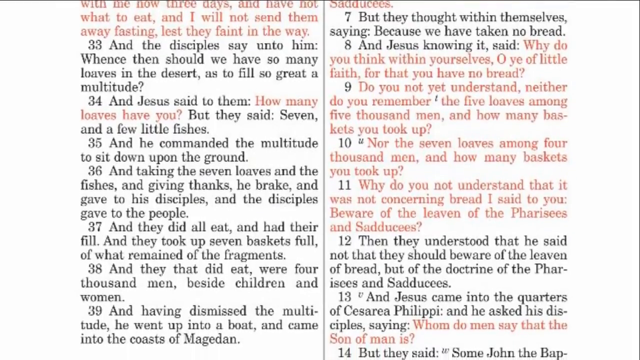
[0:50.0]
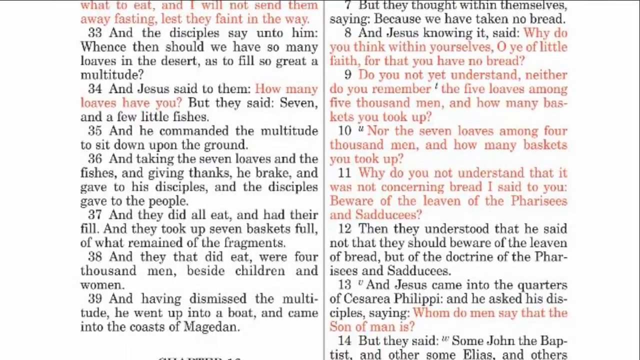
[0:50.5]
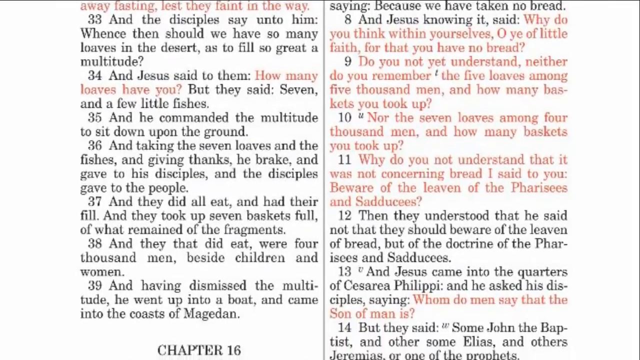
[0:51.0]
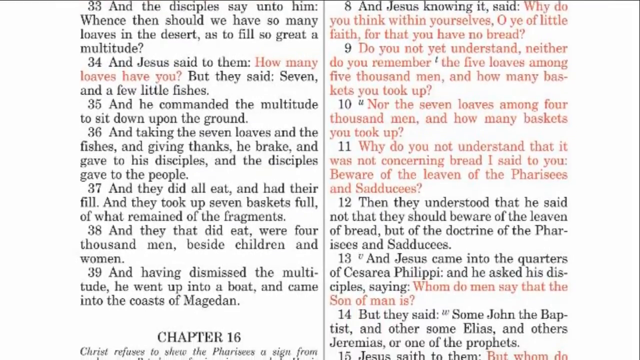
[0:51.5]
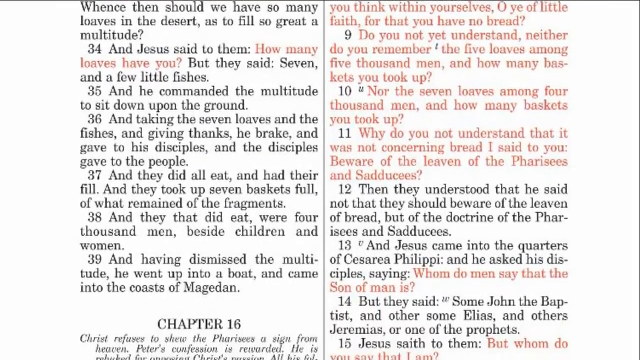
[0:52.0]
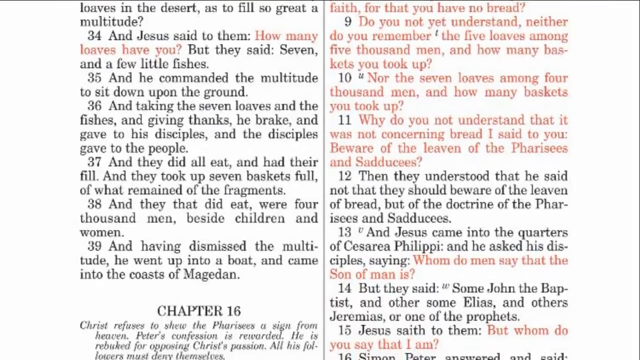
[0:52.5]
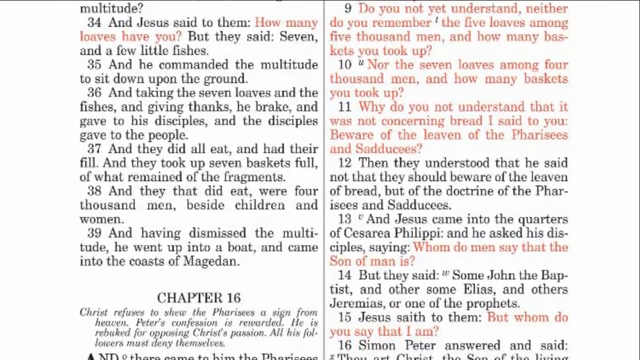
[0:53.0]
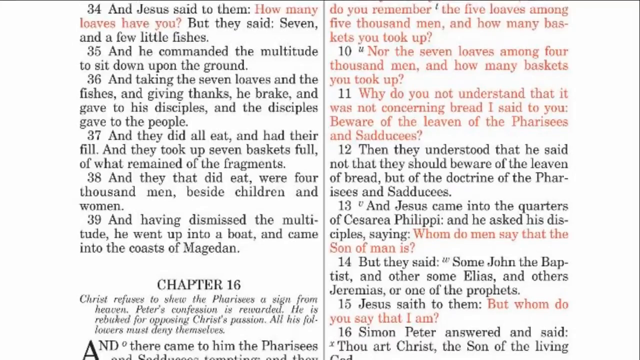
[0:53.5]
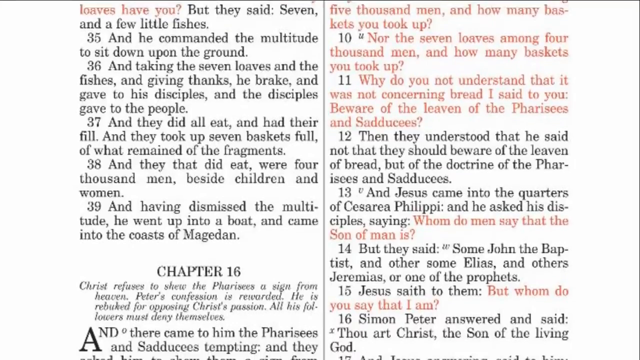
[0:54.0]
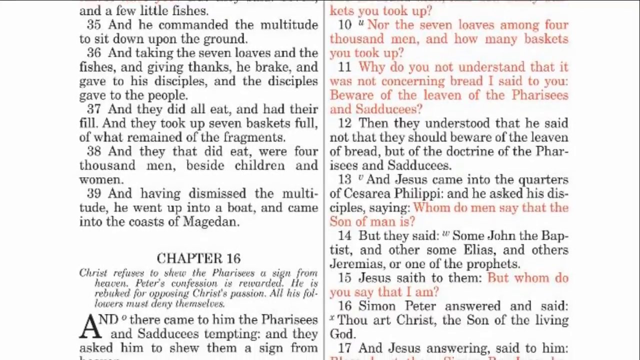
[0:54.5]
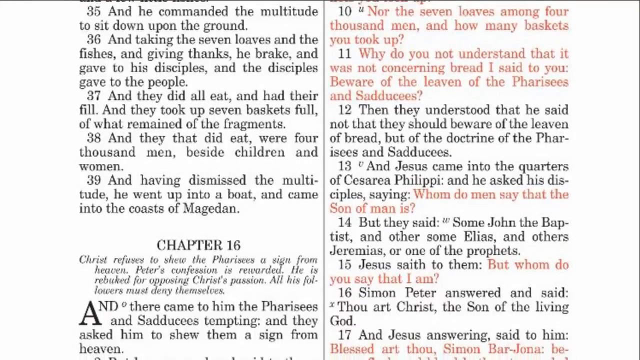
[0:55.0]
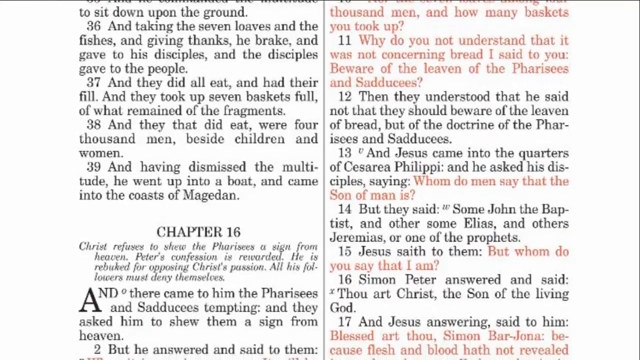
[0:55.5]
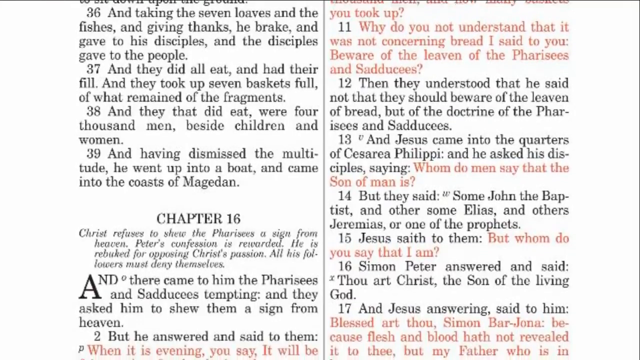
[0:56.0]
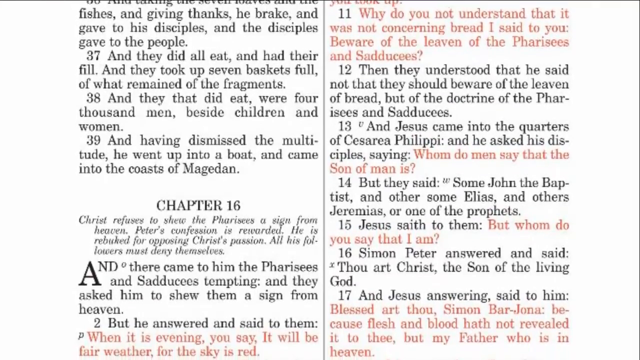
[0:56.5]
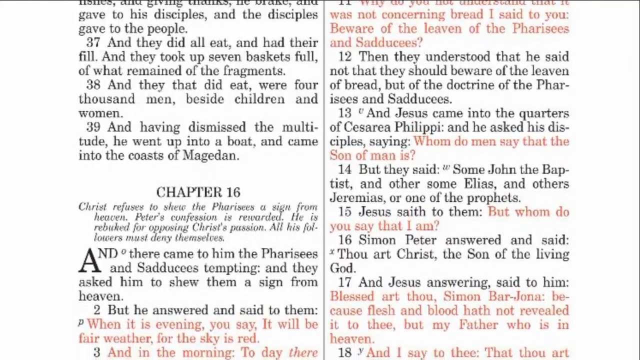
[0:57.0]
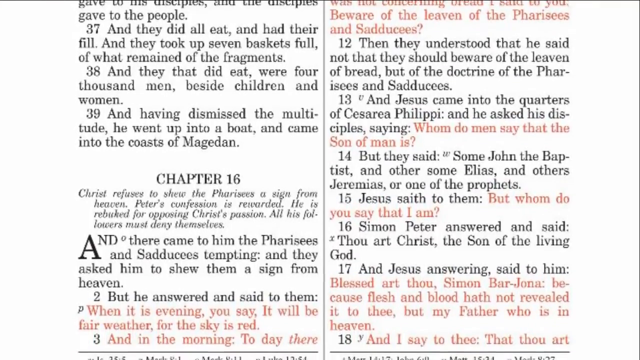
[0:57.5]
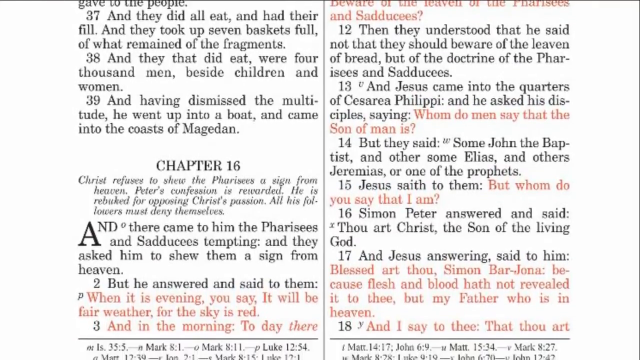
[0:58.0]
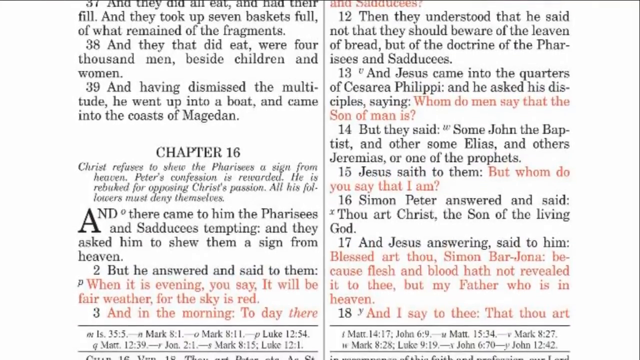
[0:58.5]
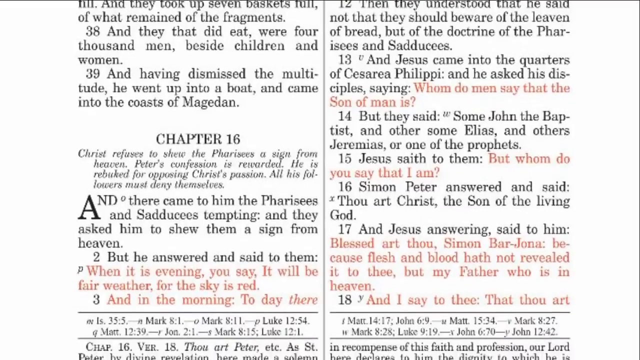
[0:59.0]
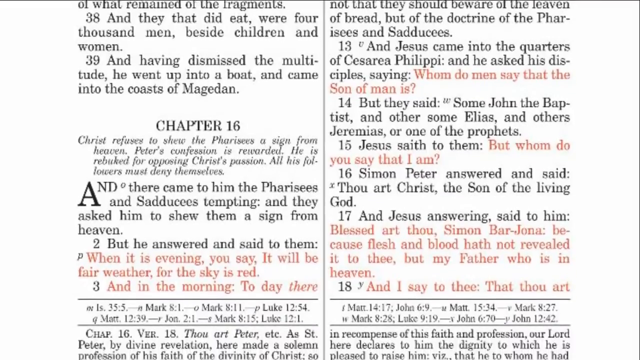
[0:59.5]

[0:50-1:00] The Bible remains open at Matthew 16, labeled "St. Matthew". At the top left of the page are words in red, the words of Christ, and just below them verse 33 begins in black: "And the disciples say unto him, Whence then should we have so many loaves in the desert, as to fill so great a multitude?" Verse 34 follows: "And Jesus said to them, How many loaves have you?", in red. The text continues on to verse 39. Beyond a faint black line on the right side of the page, the visible text starts from verse 7, which reads "But they thought within themselves, saying, Because we have taken no bread." The text apparently continues there from chapter 15 to chapter 16. The view slowly scrolls down until chapter 16 appears at the bottom.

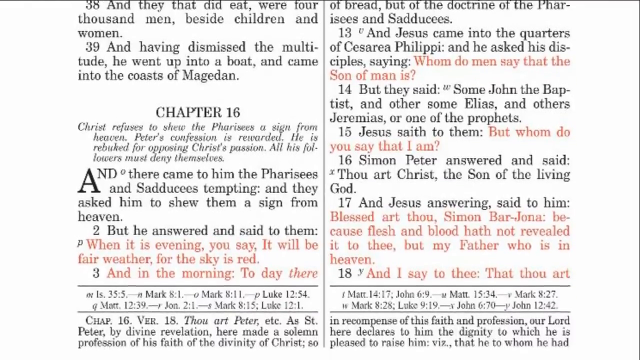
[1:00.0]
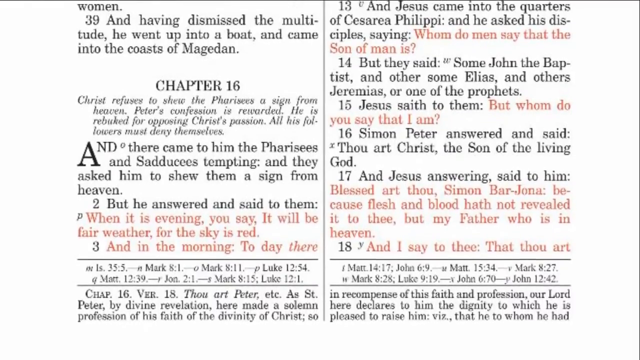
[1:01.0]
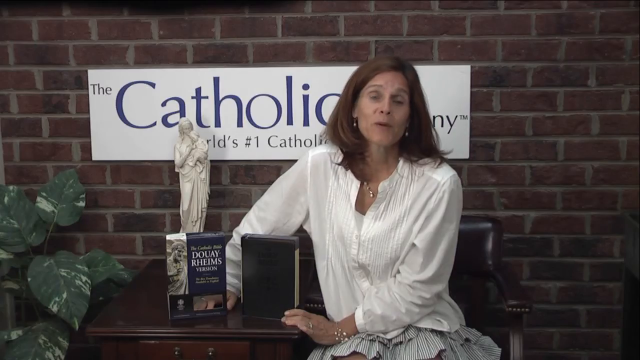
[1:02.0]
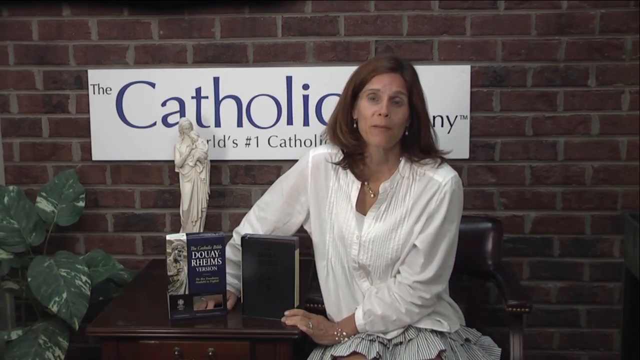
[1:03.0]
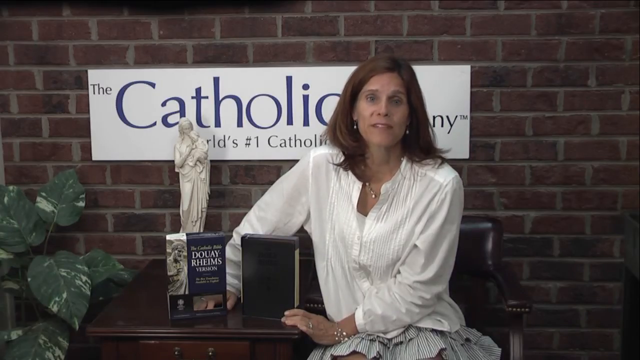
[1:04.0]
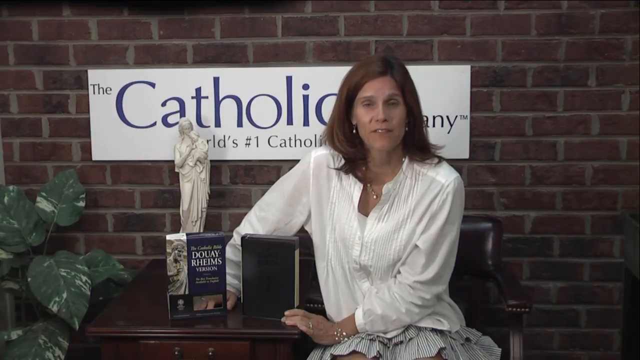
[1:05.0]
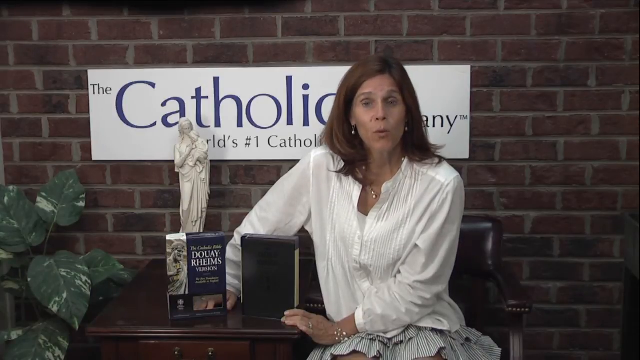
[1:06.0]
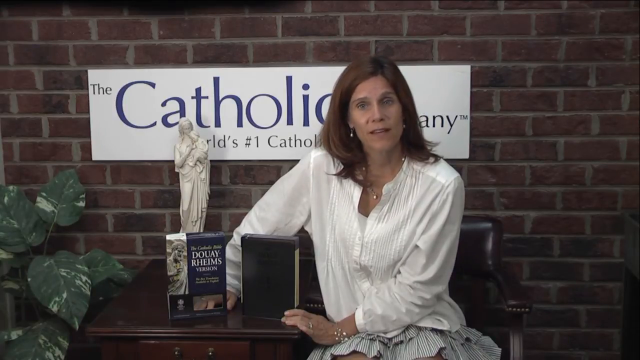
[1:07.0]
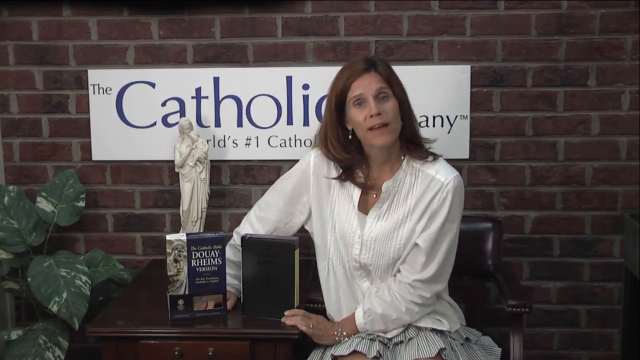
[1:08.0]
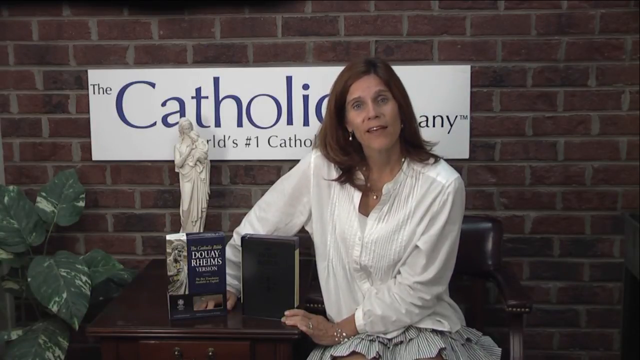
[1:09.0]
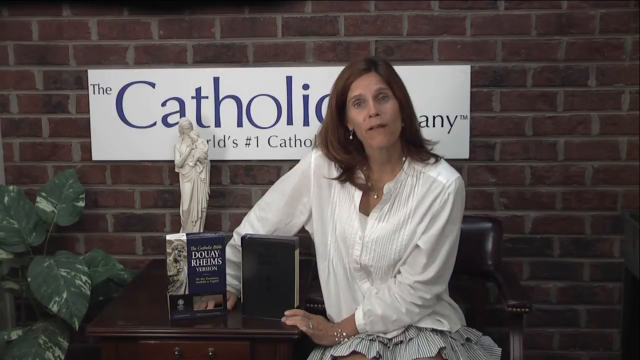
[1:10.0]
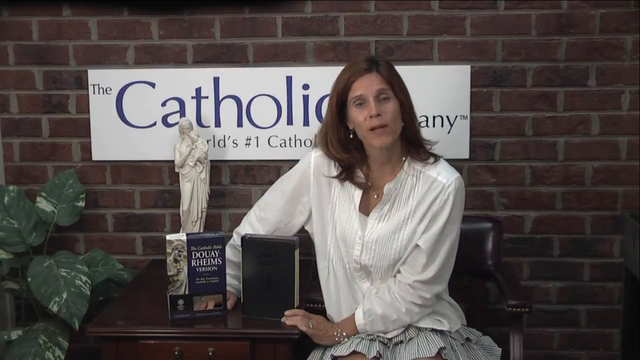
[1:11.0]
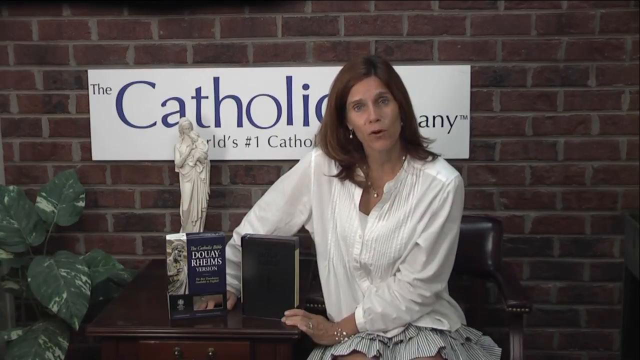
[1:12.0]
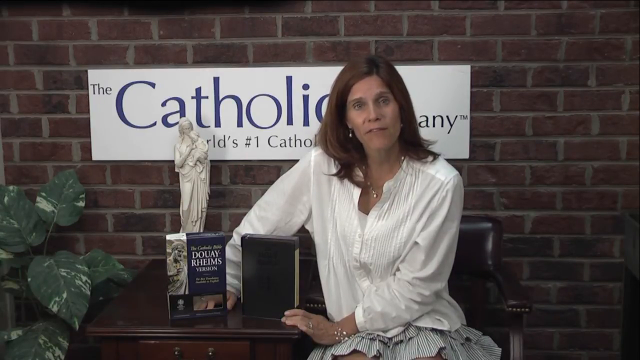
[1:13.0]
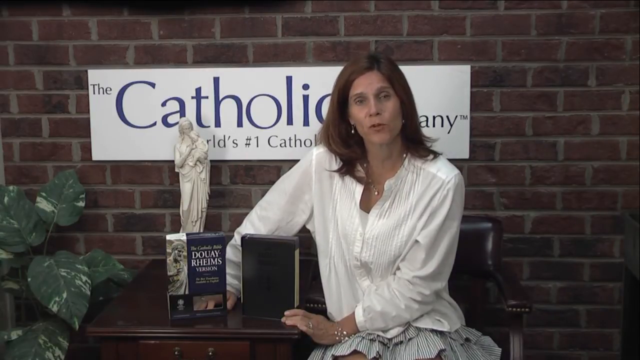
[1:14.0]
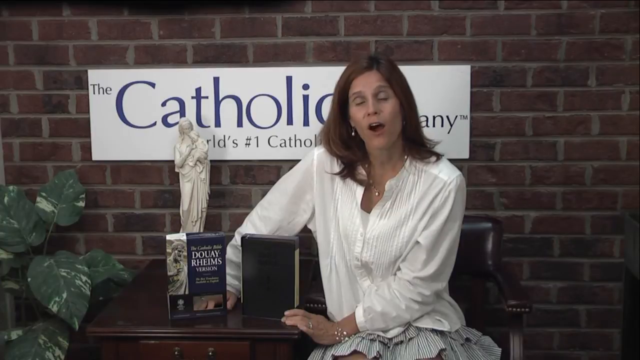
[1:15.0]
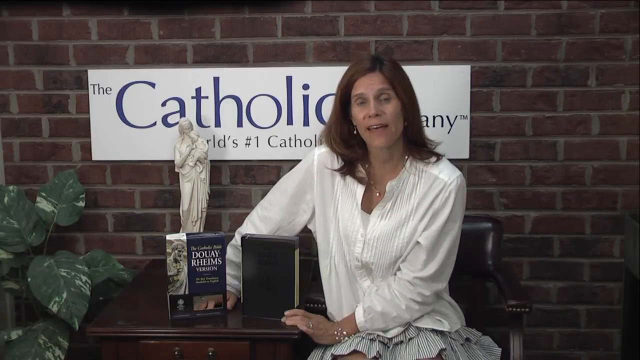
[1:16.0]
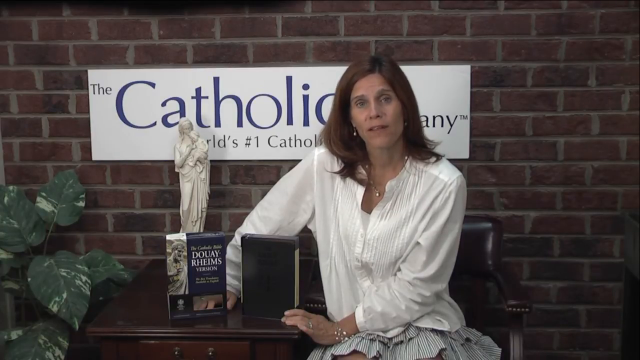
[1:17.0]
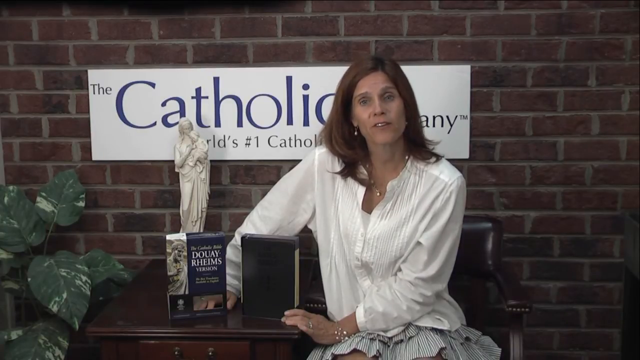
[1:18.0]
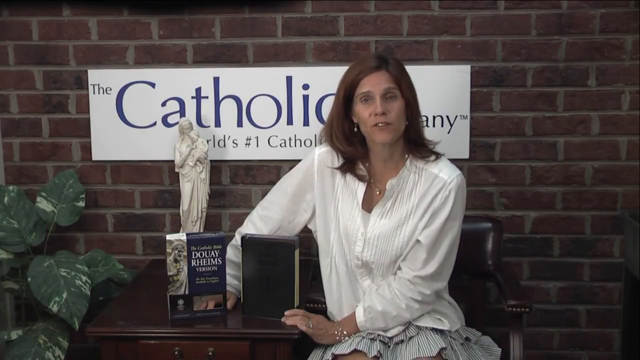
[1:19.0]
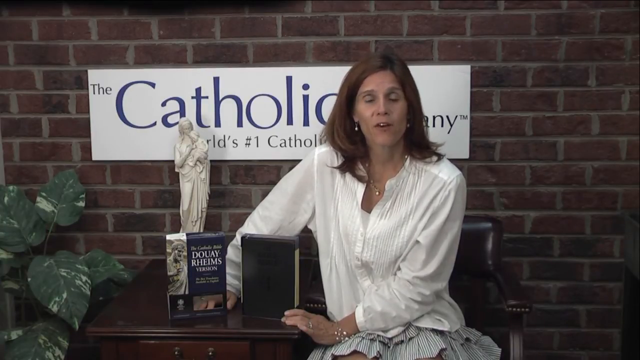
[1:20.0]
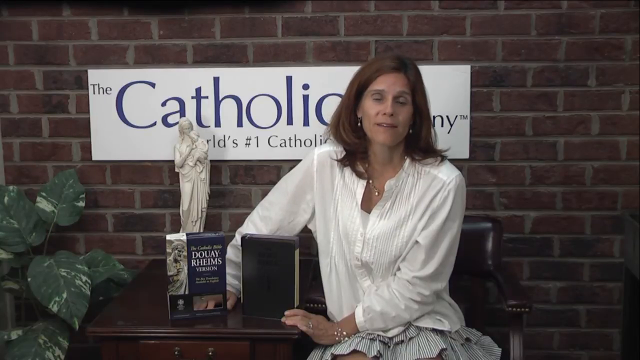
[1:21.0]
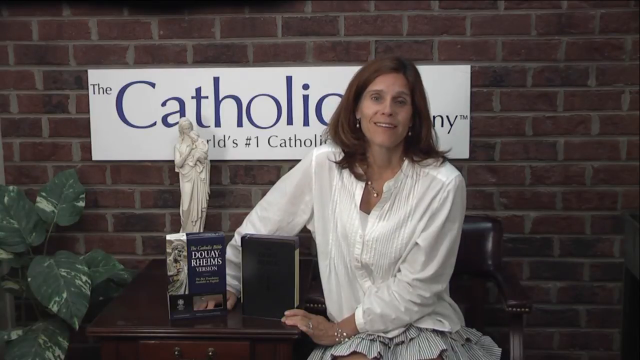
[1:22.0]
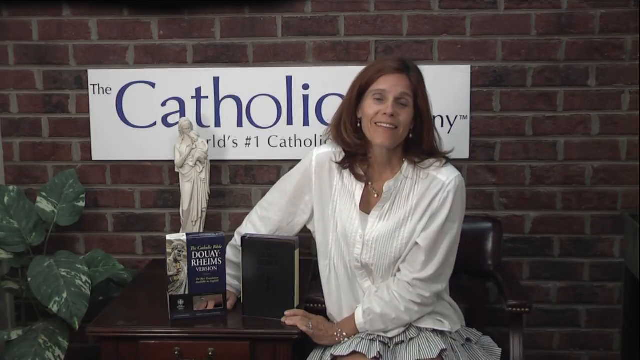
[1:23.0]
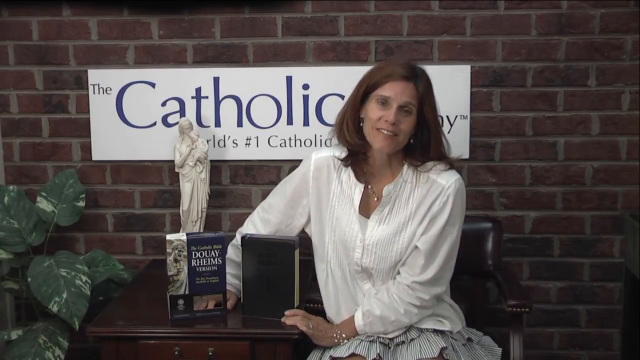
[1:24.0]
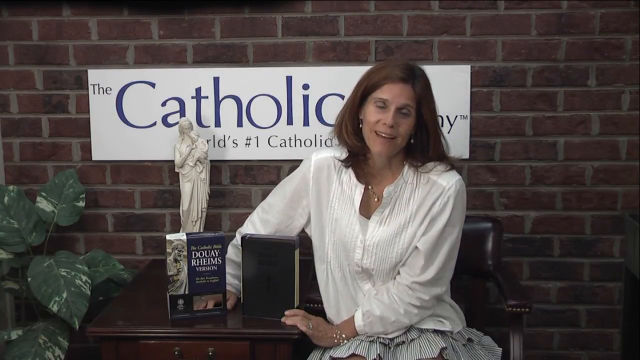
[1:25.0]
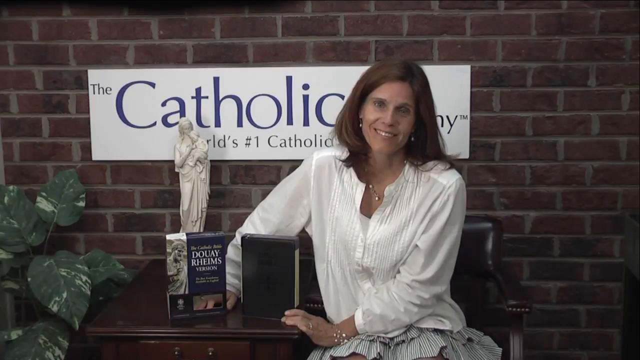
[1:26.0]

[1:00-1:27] "CHAPTER 16" appears in black all-caps lettering on the left side of the thin line in the middle of the Bible page. Below it, in very faint italics, it reads: "Christ refuses to show the Pharisees a sign from heaven. Peter's confession is rewarded. He is rebuked for opposing Christ's passion. All his followers must deny themselves." Below that is a massive black capital A followed by smaller capitals ND, spelling "AND", which begins verse 1: "They came to him, the Pharisees and Sadducees, tempting, and they asked him to show them a sign from heaven." Verse 2 reads "but he answered and said to them," followed in red by "when it is evening you say it will be fair weather, for the sky is red." Verse 3 begins "And in the morning", but the rest of it cannot be seen; at the very top of the page only the end of verse 12 and the start of verse 13 are visible. The page ends with the first part of verse 18. The page then rolls by and the lady appears again, still talking. She tilts her head and looks very sincere.